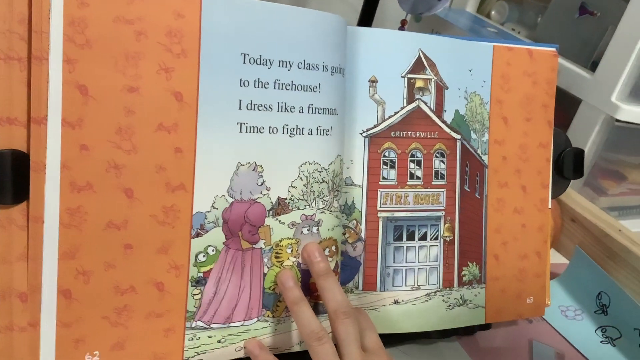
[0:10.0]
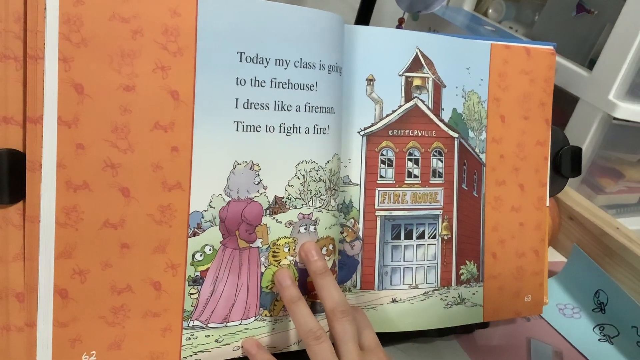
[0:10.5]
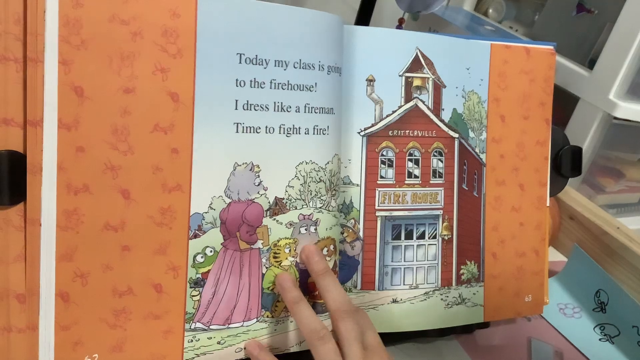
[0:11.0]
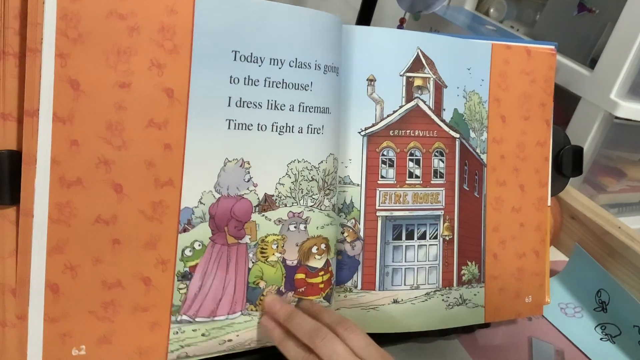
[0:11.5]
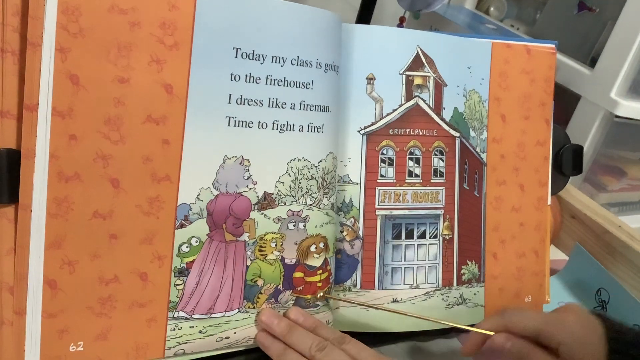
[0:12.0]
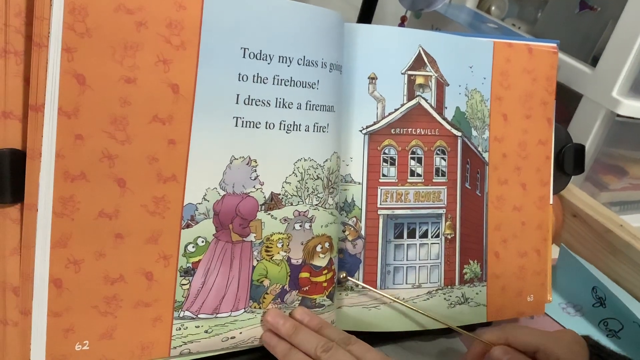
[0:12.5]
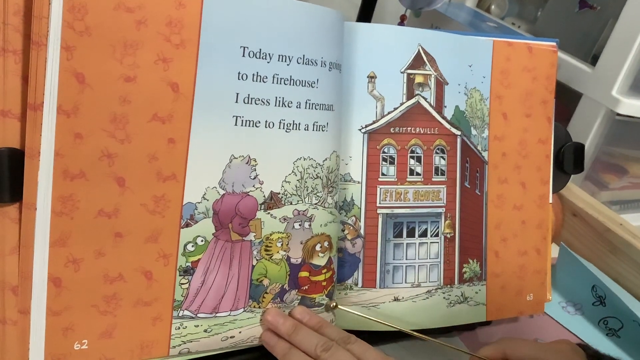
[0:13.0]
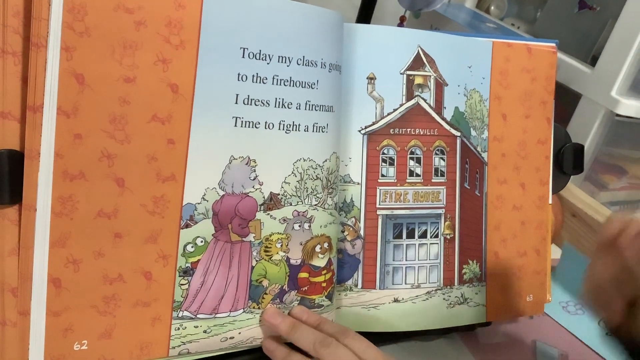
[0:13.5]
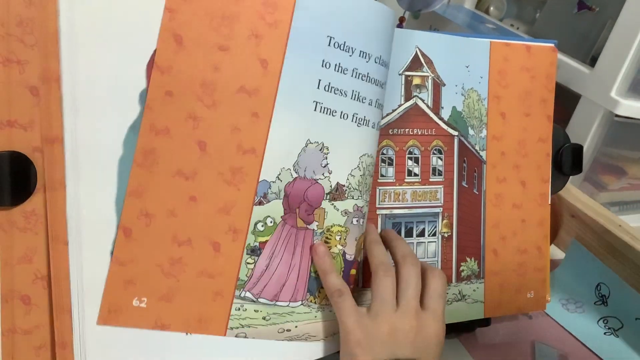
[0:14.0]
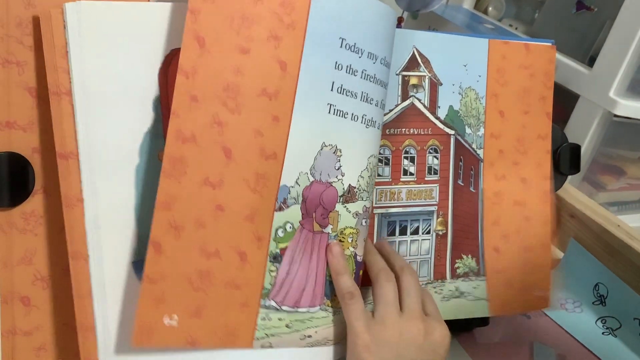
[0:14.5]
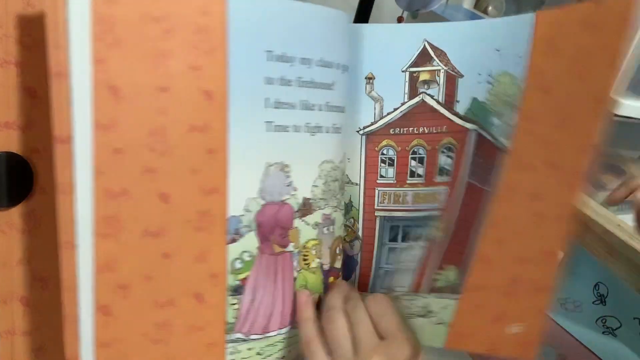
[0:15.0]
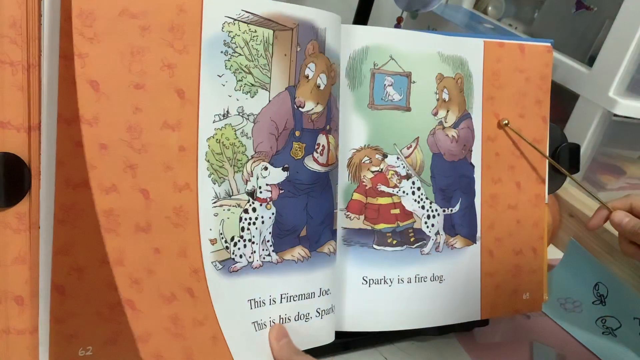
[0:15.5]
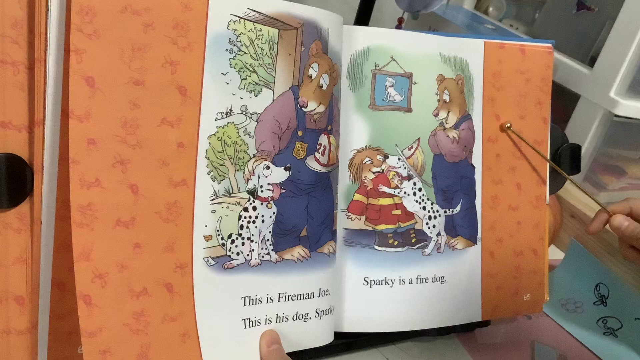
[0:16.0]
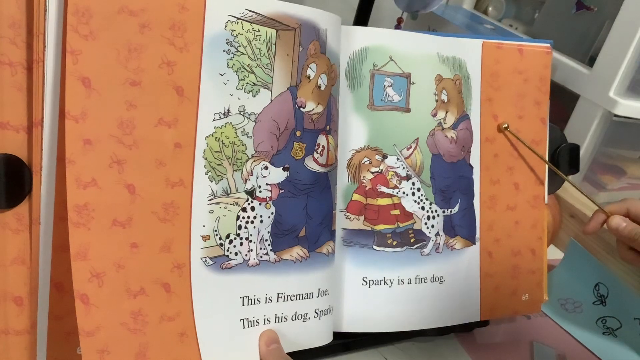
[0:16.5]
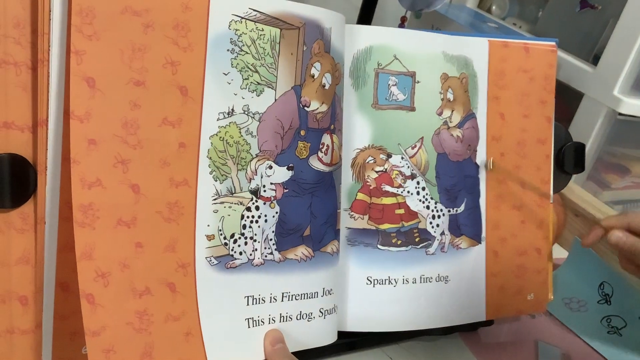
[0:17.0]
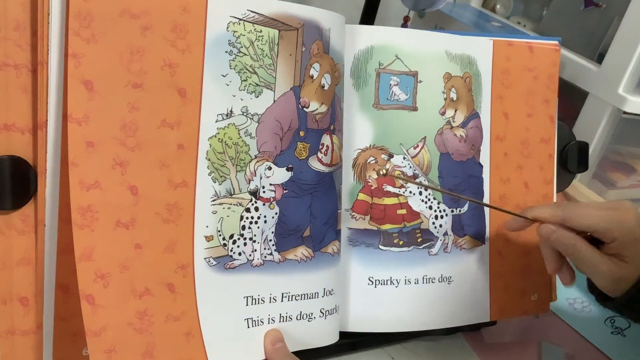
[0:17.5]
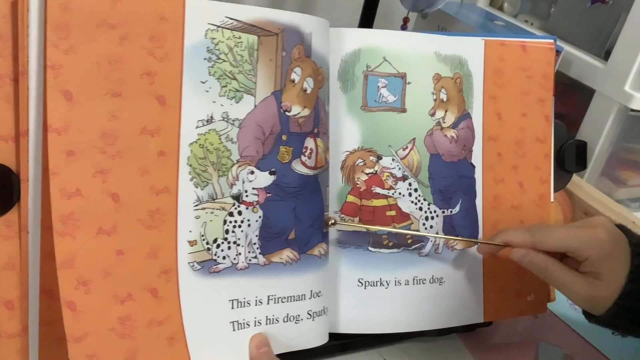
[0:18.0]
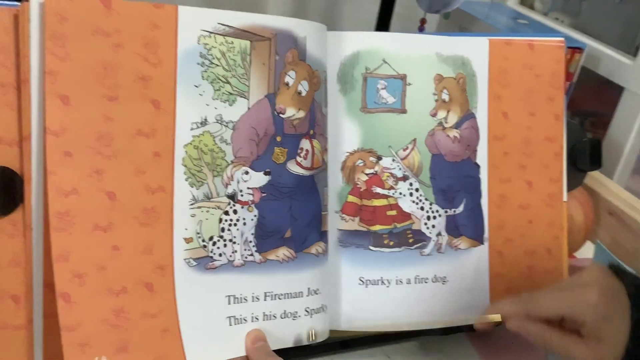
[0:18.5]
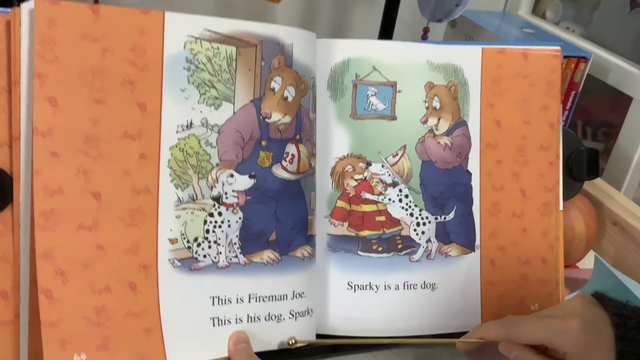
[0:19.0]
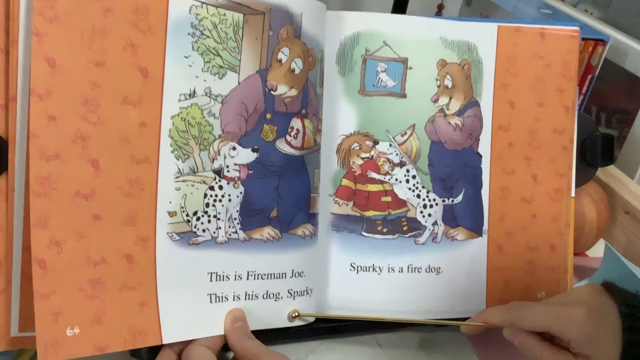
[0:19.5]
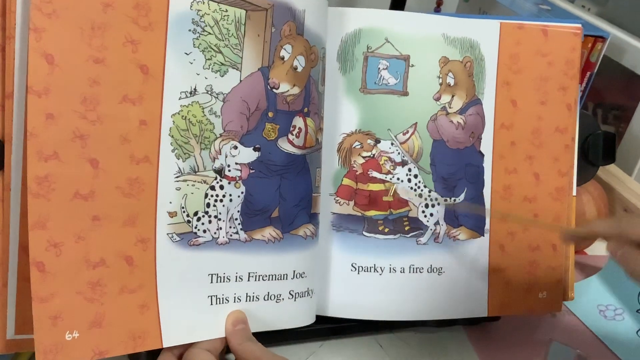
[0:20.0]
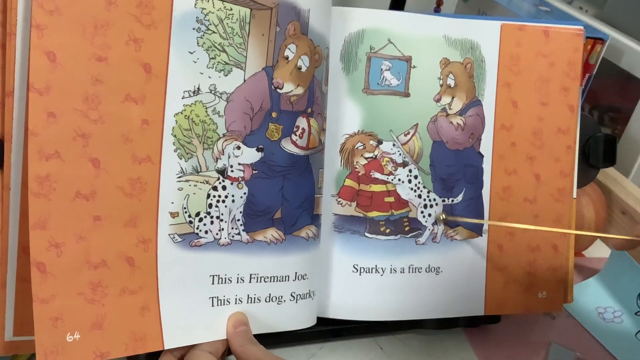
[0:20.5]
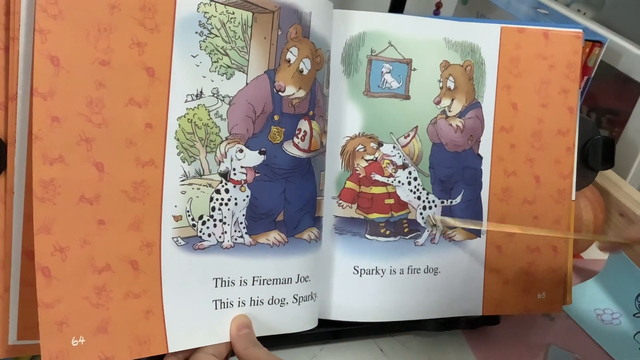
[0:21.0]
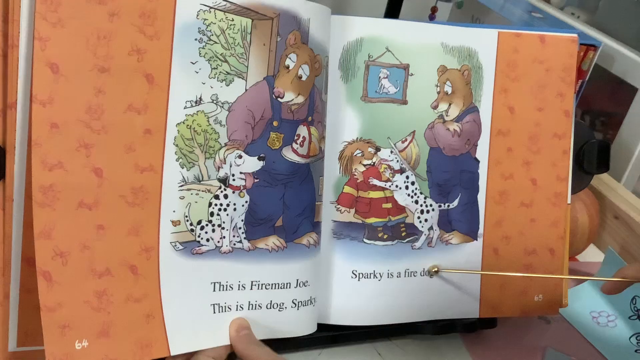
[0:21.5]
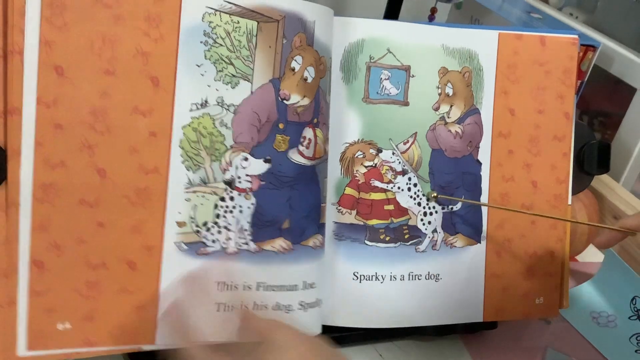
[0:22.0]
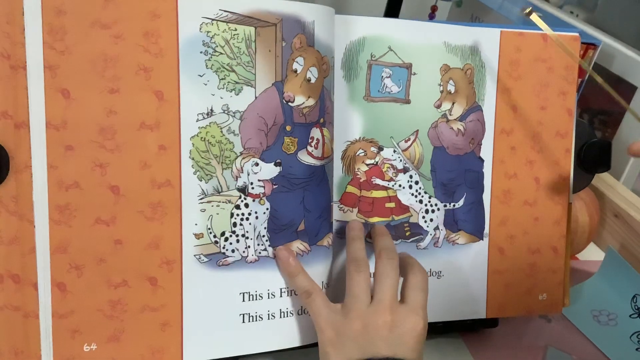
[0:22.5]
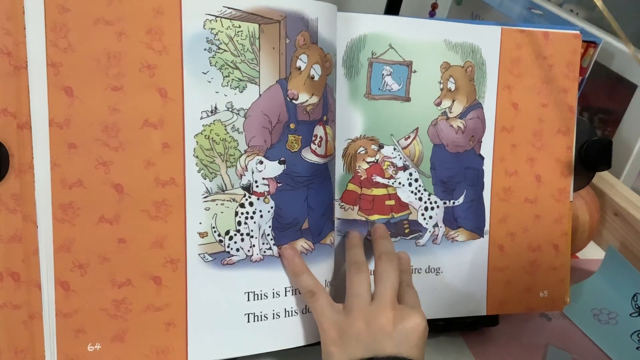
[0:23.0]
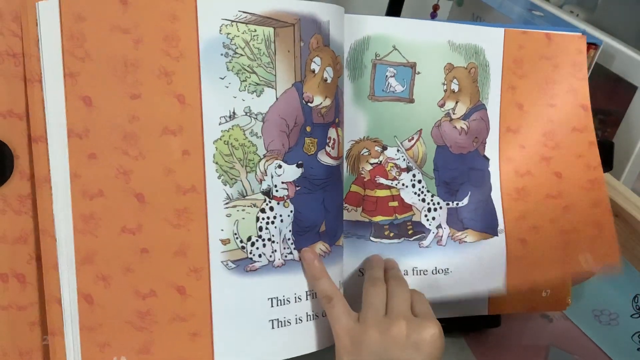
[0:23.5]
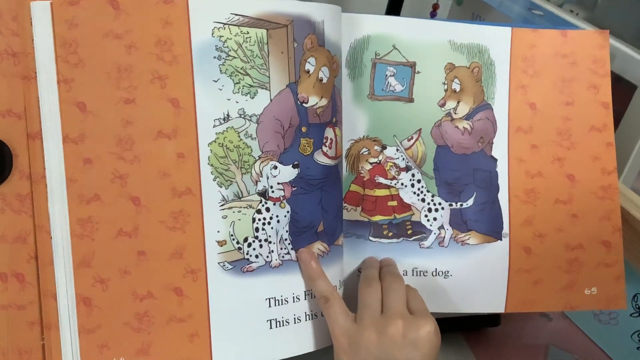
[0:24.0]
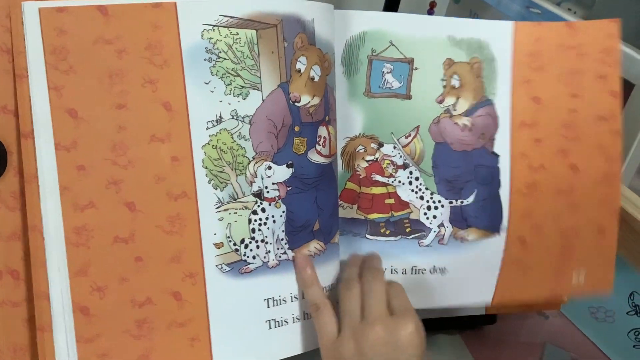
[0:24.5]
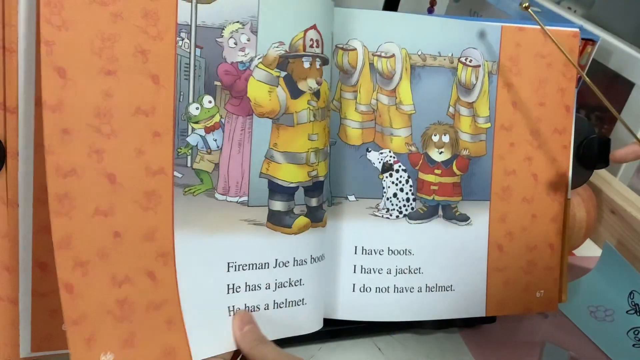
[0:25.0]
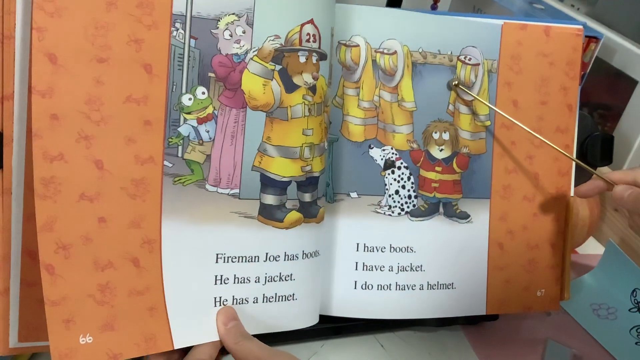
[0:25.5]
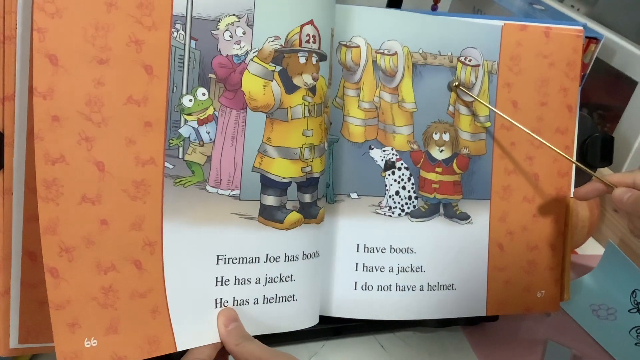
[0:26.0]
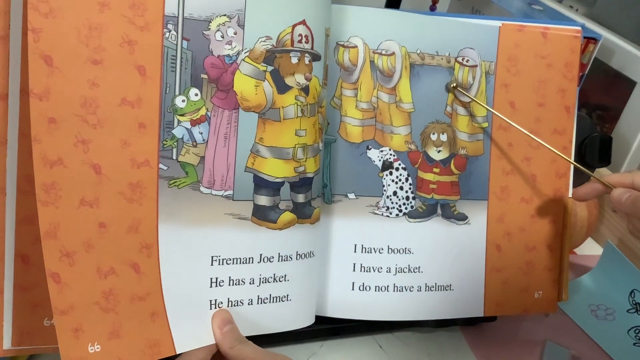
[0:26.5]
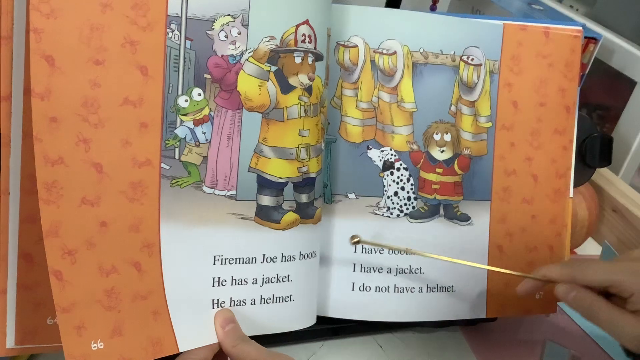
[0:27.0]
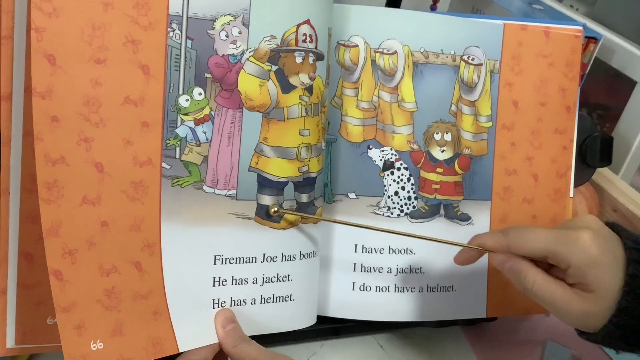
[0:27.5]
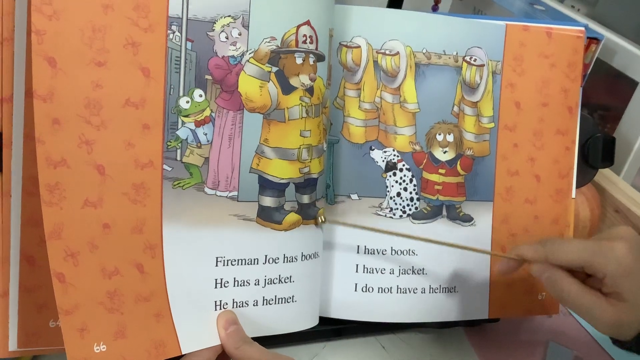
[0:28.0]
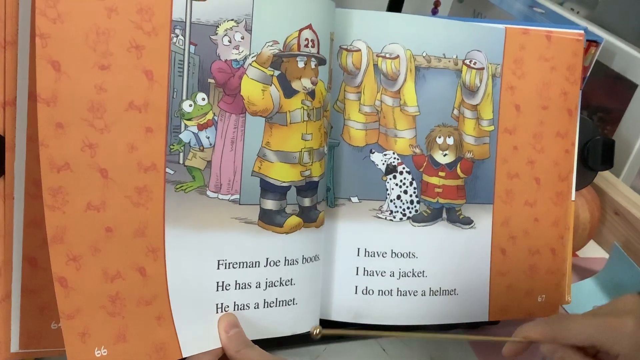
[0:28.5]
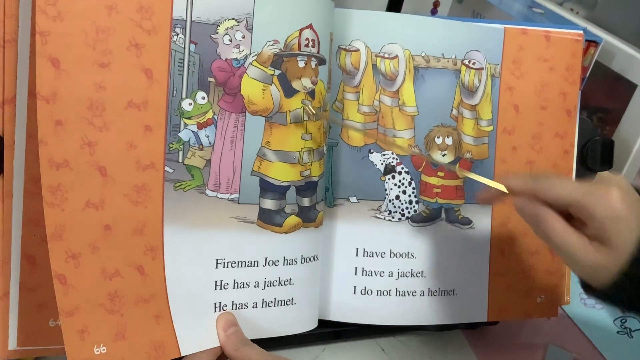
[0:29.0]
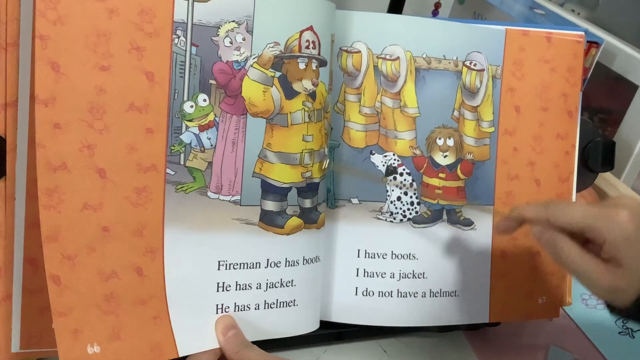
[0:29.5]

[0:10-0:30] The page turns to show another animal, a bear dressed in a fireman outfit, who has a pet Dalmatian dog that he is petting. One of the dog children seems to be visiting him. The text says, "this is fireman Joe, this is his dog, Sparky. Sparky is a fire dog." The main setting on this page is the boy's house. The next page has a different setting that looks like a changing room or locker room, where the two of them are getting changed into yellow fireman outfits while the teacher, a cat, watches. There are five people in the room. The text on this page says, "fireman Joe has boots. He has a jacket. He has a helmet. I have boots. I have a jacket. I do not have a helmet."